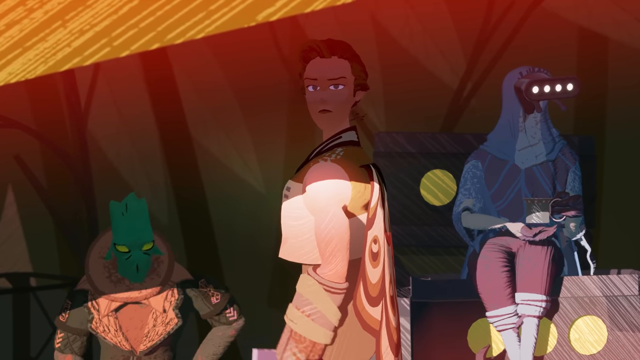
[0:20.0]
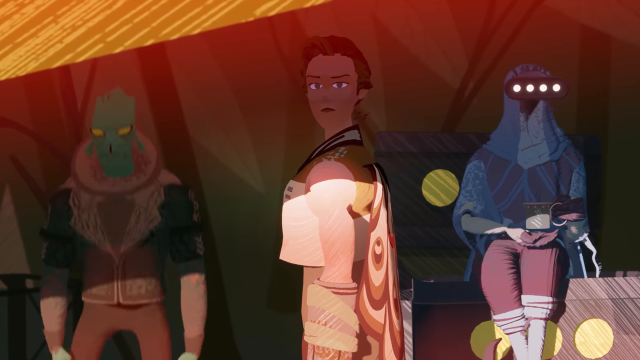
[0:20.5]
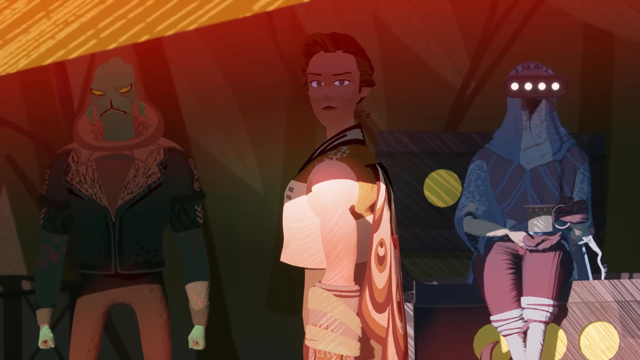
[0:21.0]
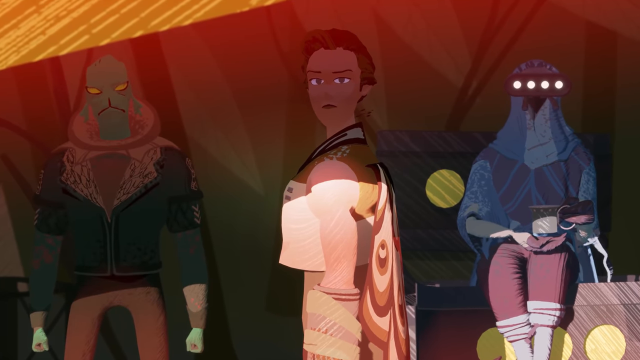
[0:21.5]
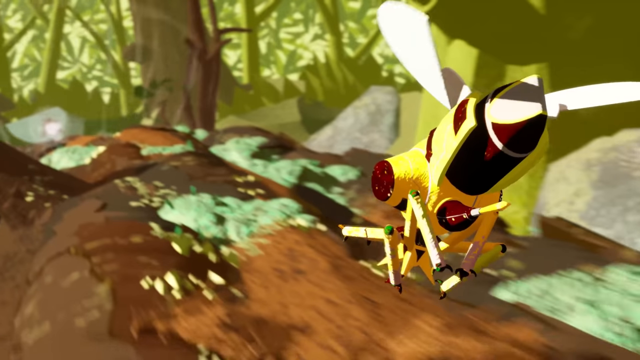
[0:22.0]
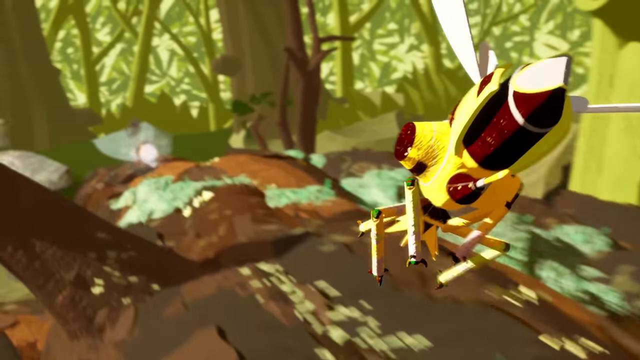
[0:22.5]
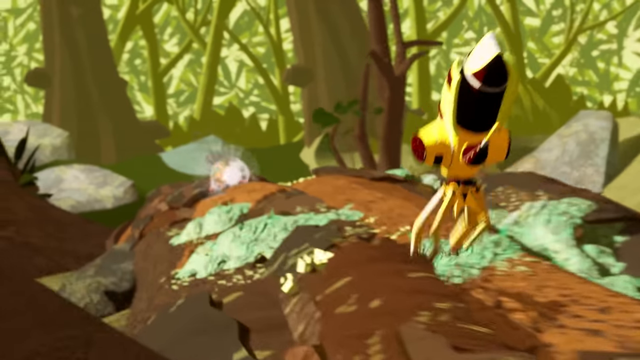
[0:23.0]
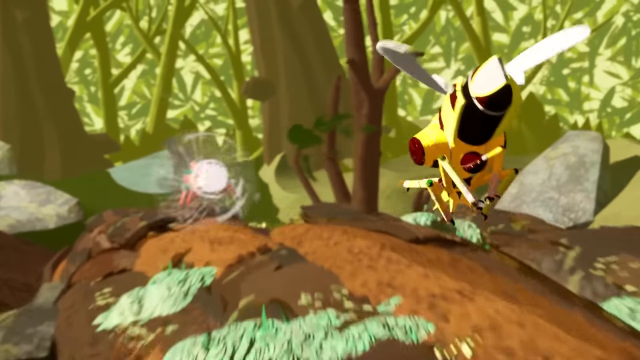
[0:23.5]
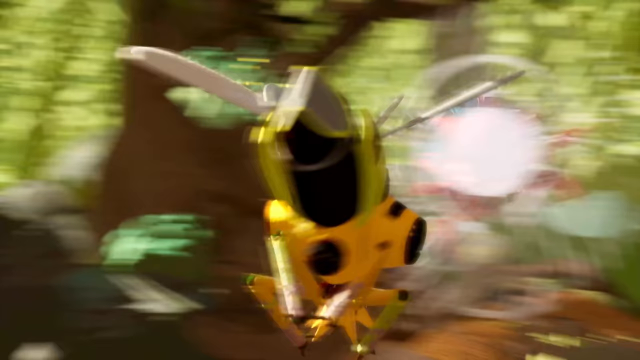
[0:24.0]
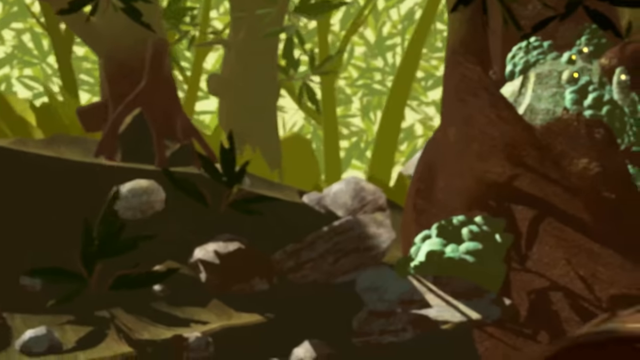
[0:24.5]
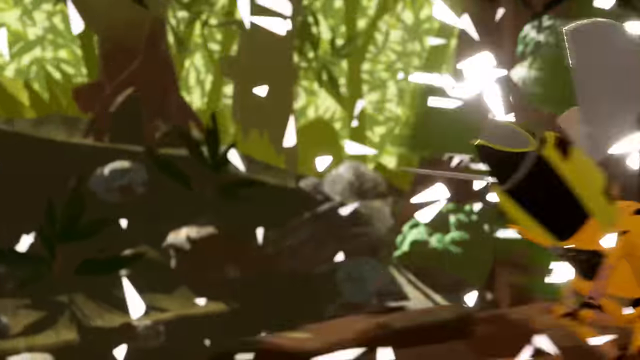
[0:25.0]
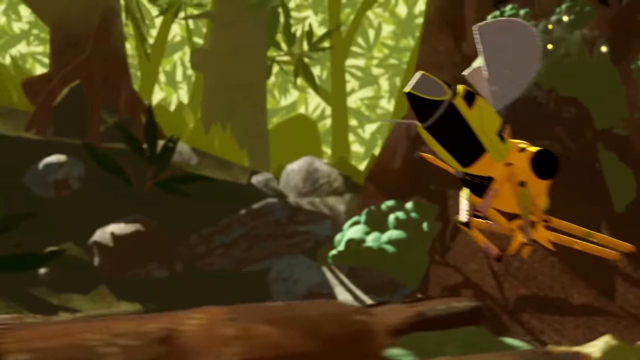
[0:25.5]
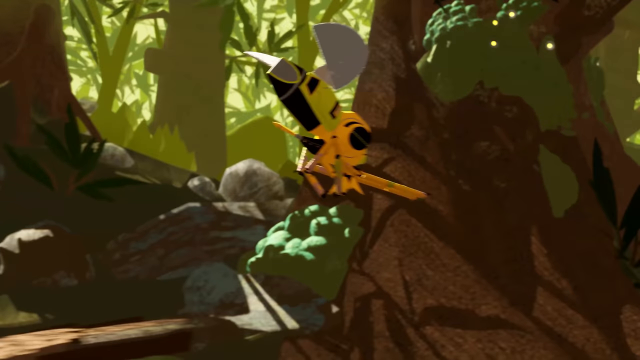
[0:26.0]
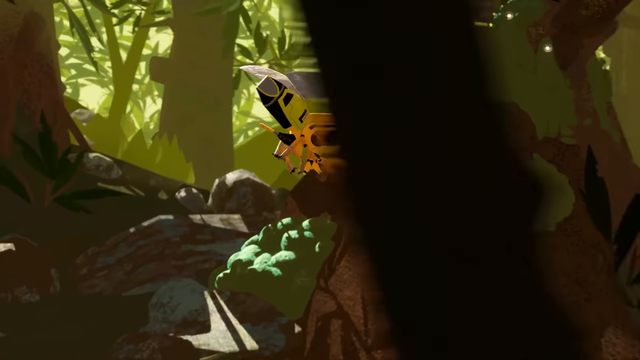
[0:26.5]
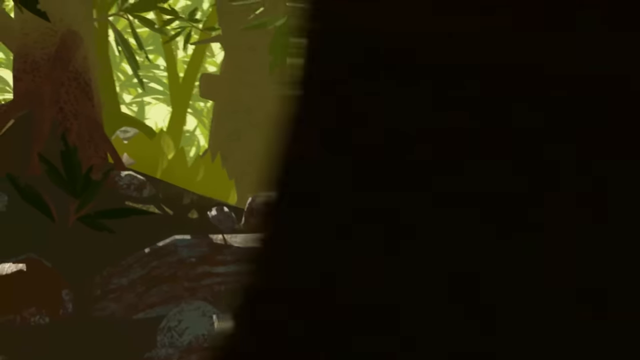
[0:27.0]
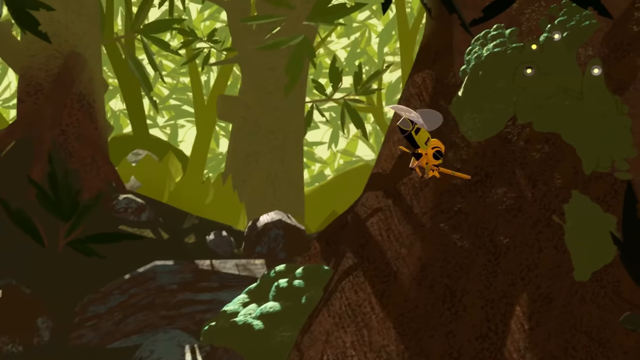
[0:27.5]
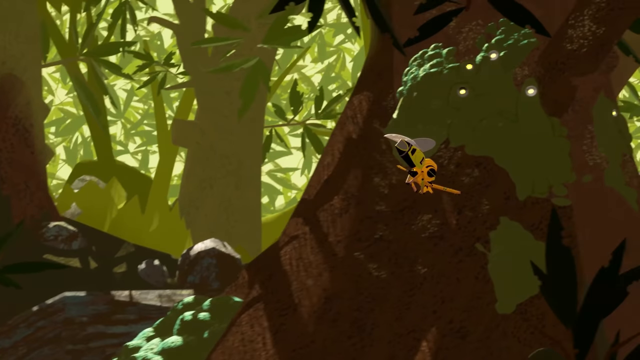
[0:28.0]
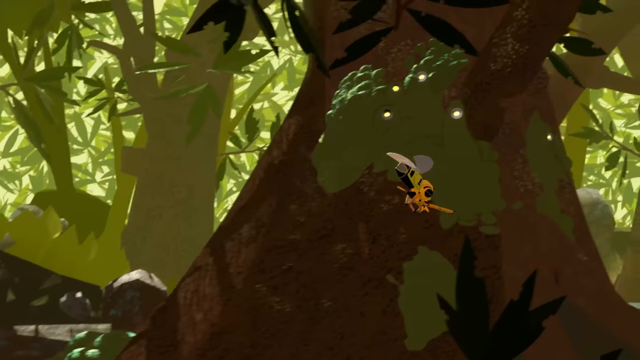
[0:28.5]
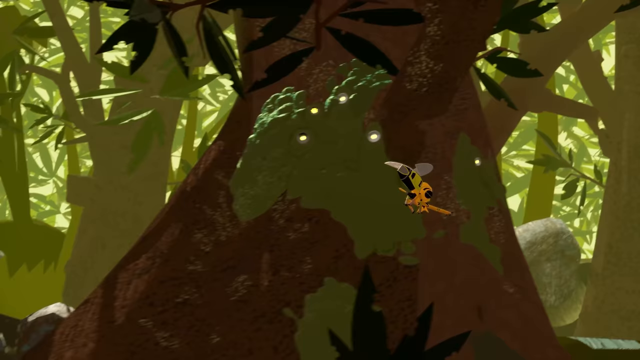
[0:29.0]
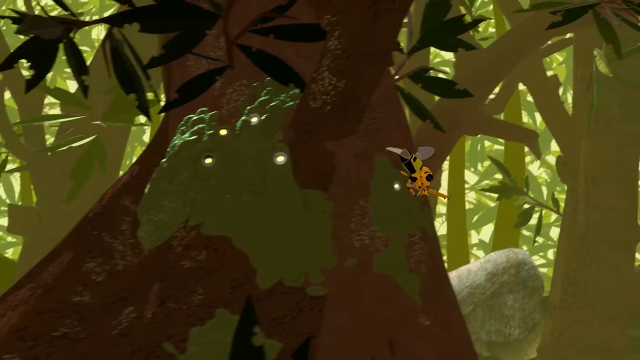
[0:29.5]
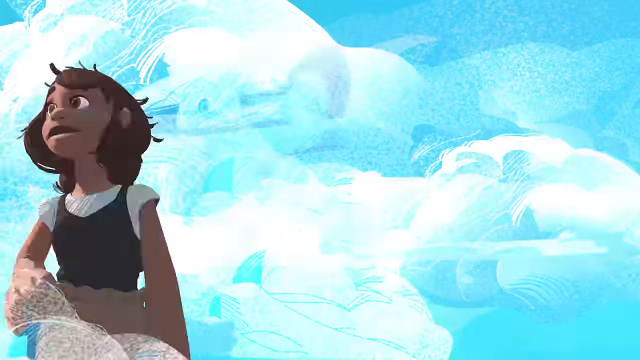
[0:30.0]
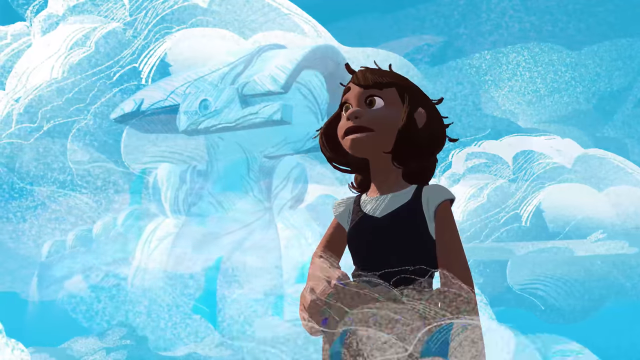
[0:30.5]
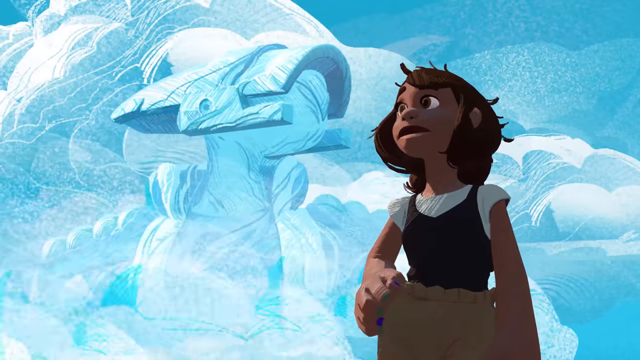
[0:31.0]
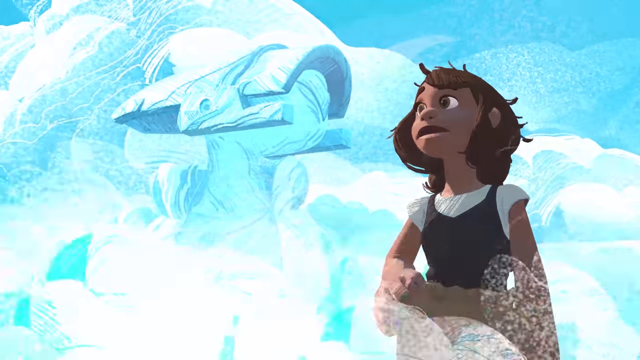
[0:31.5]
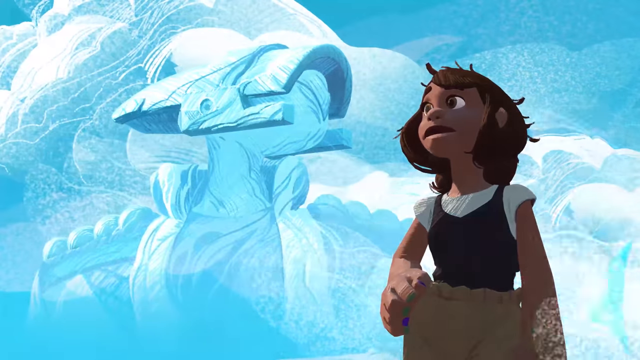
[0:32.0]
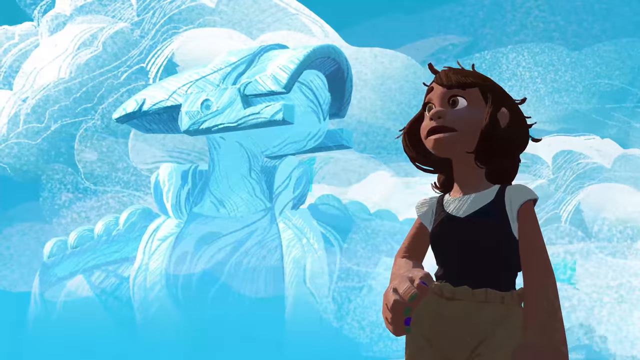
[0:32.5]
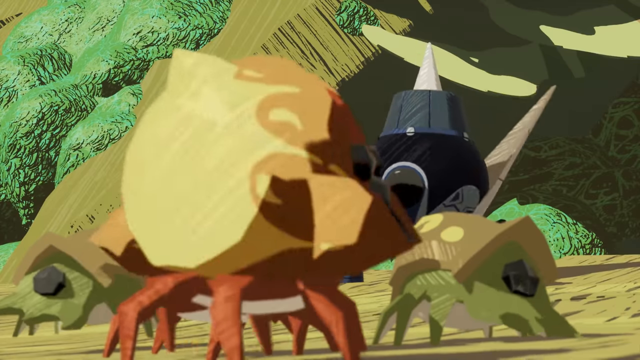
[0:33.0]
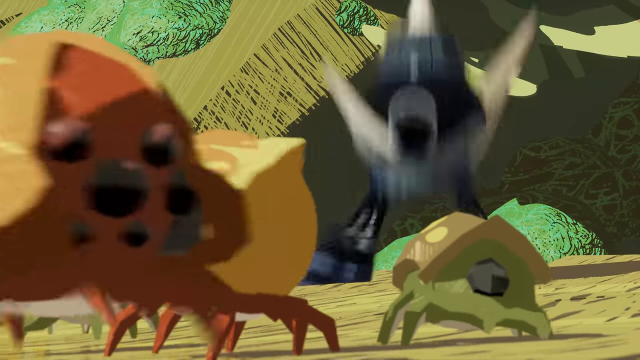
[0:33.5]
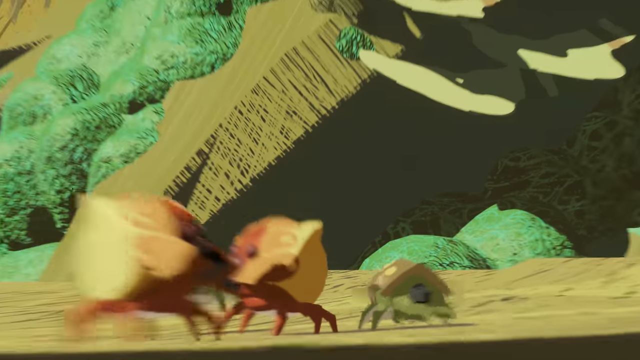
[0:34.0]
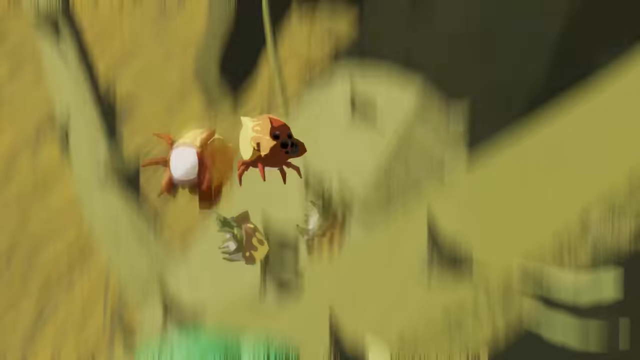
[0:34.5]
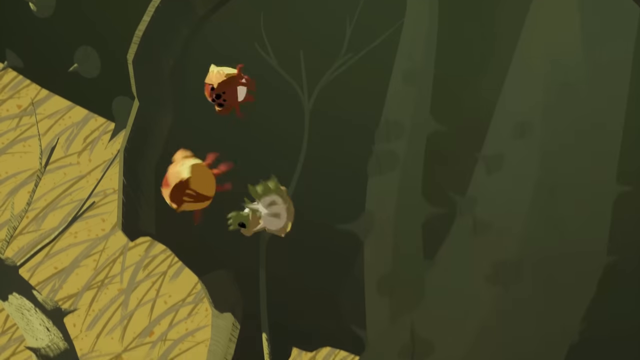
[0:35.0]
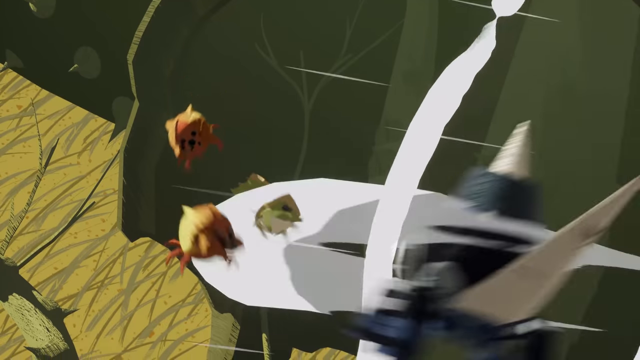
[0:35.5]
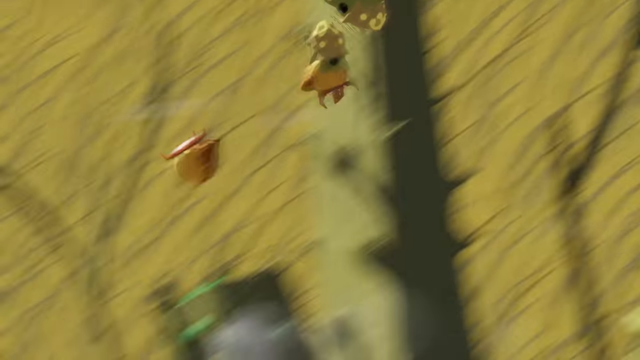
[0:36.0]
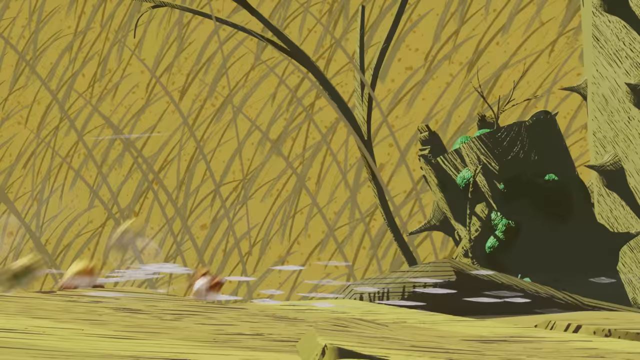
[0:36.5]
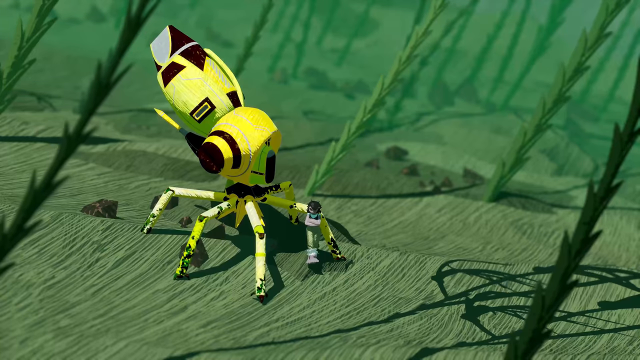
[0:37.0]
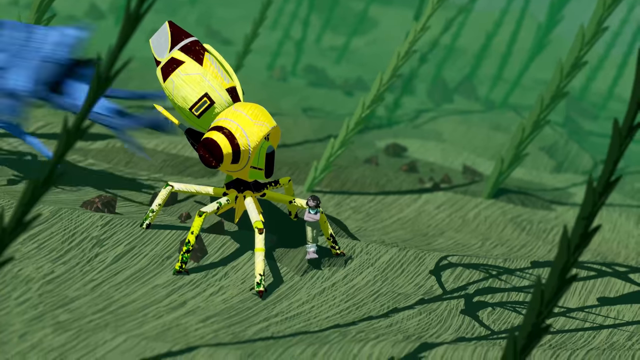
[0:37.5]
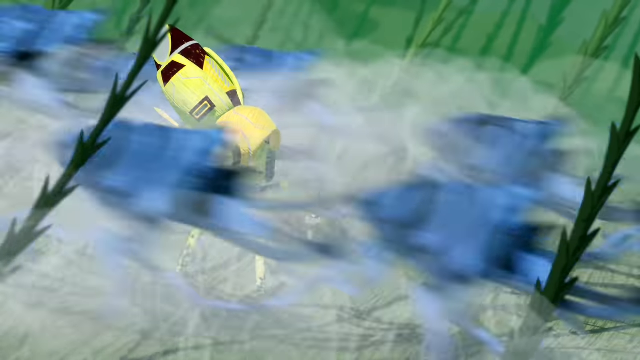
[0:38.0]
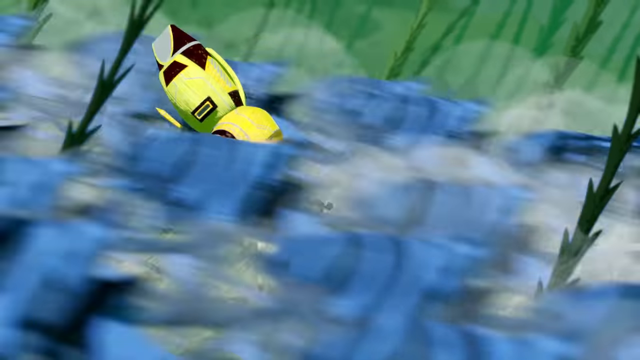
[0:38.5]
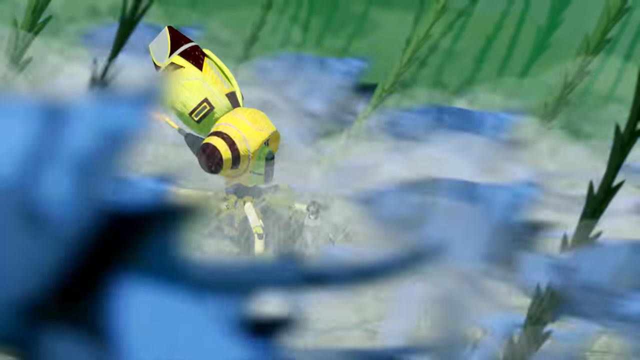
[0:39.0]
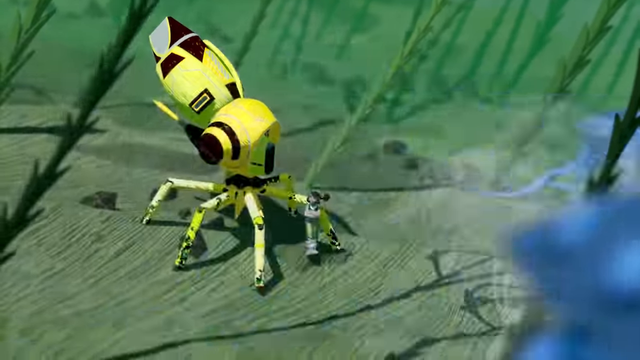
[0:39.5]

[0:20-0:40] The video game cutscene continues with people in a tent, though not all of them are people: one is a woman, and there appears to be an alien to her left and another alien on her right. The scene then returns to small creatures the size of insects that are actually vehicles, with tiny people inside them.